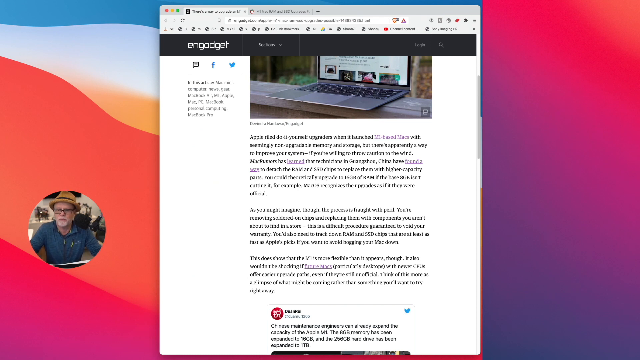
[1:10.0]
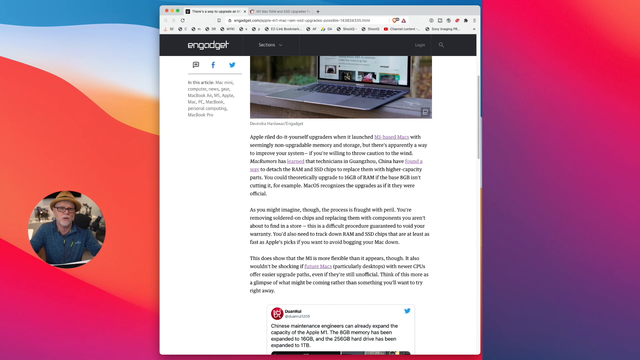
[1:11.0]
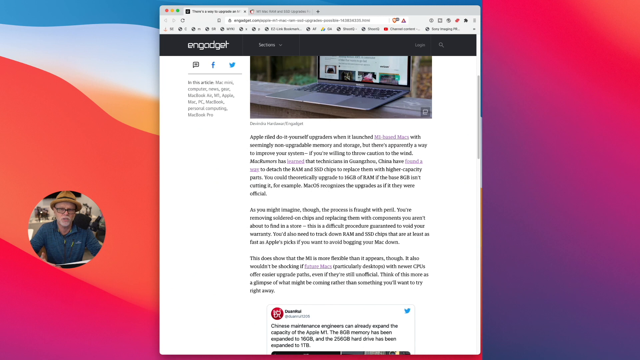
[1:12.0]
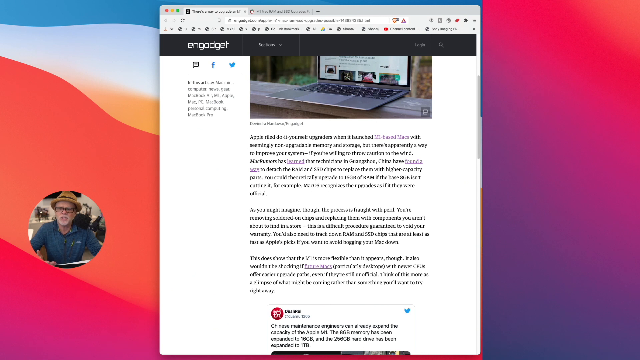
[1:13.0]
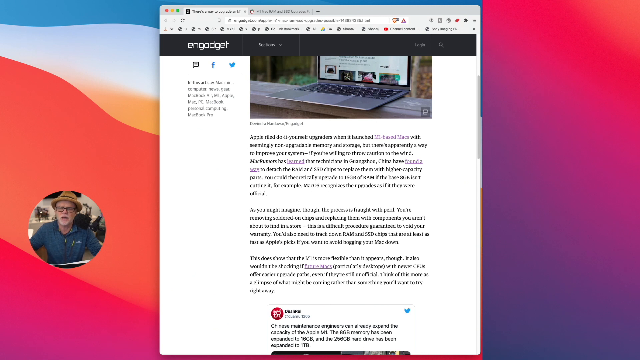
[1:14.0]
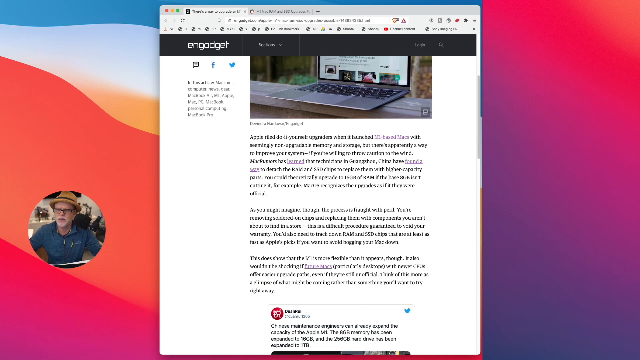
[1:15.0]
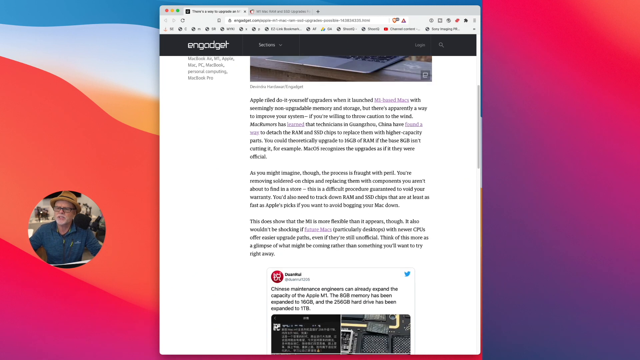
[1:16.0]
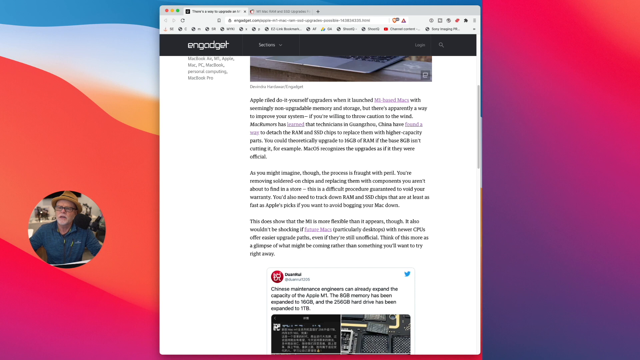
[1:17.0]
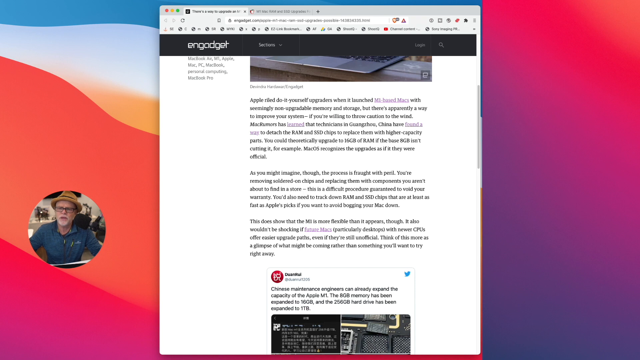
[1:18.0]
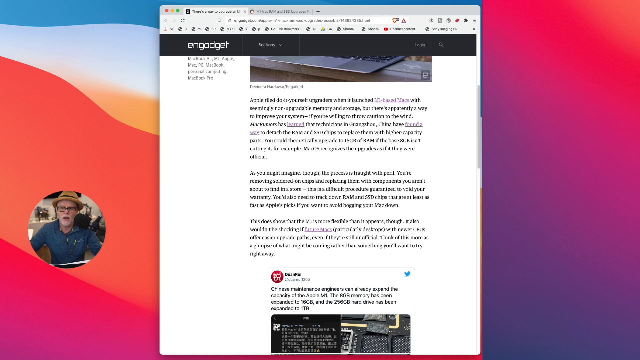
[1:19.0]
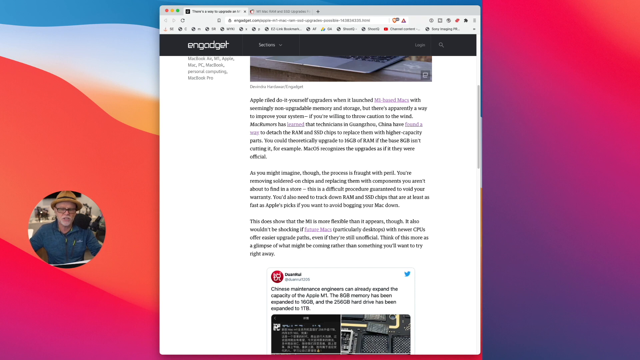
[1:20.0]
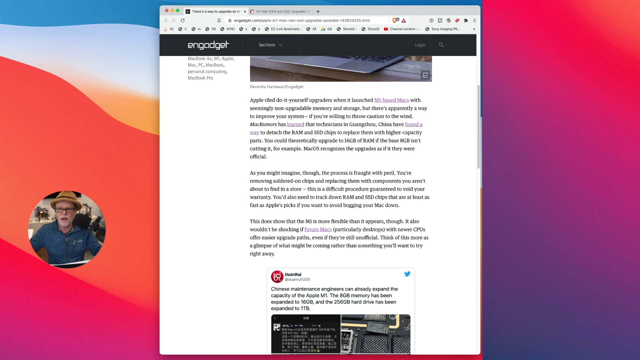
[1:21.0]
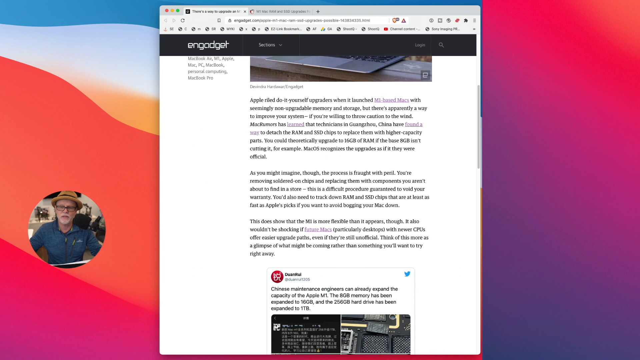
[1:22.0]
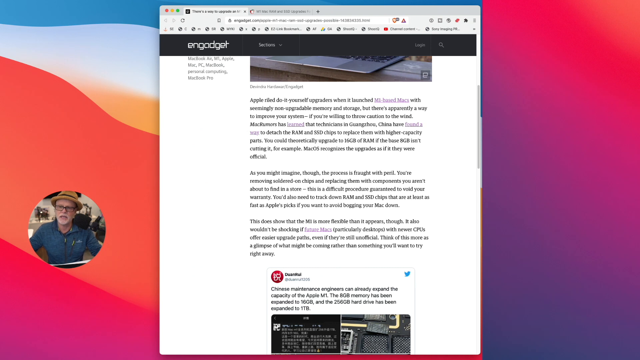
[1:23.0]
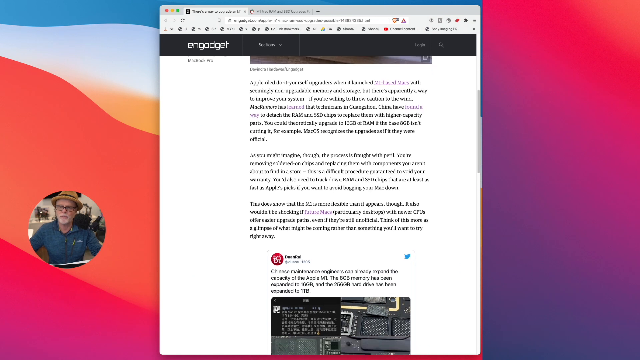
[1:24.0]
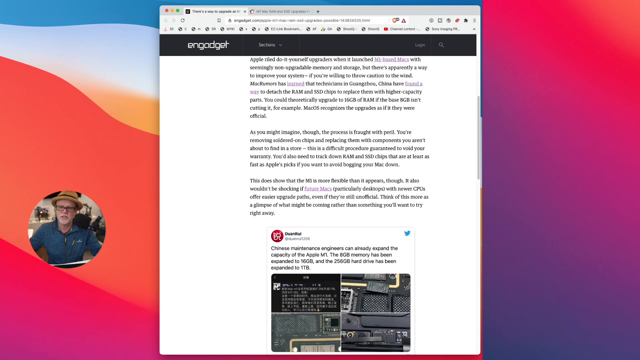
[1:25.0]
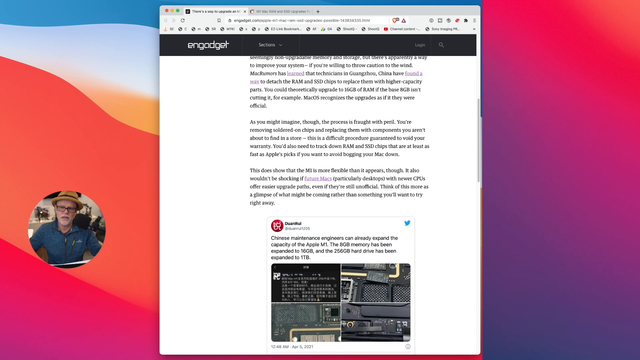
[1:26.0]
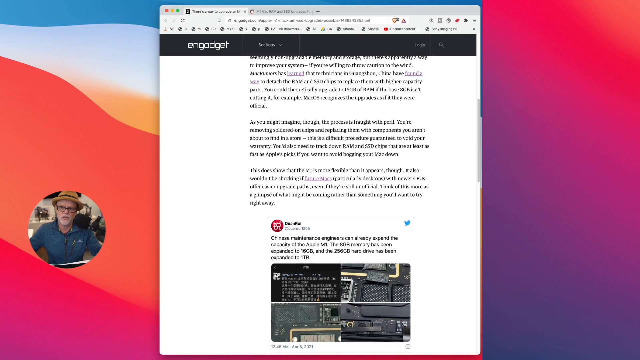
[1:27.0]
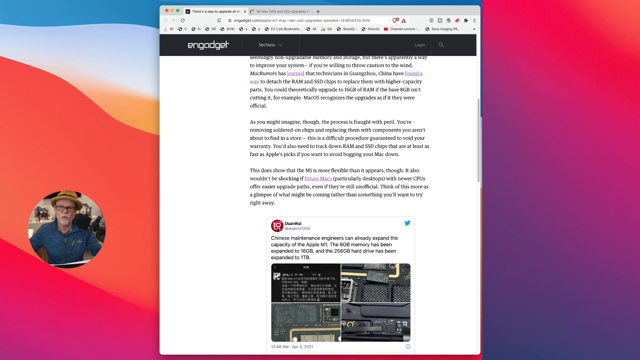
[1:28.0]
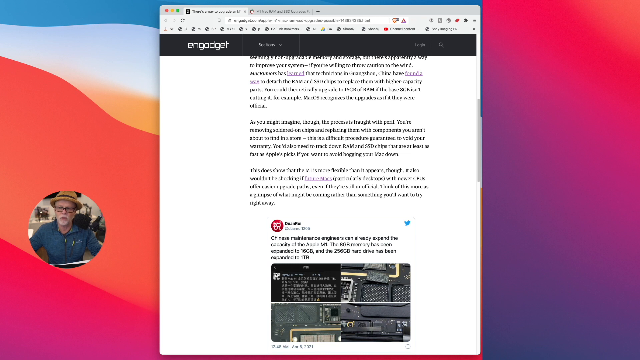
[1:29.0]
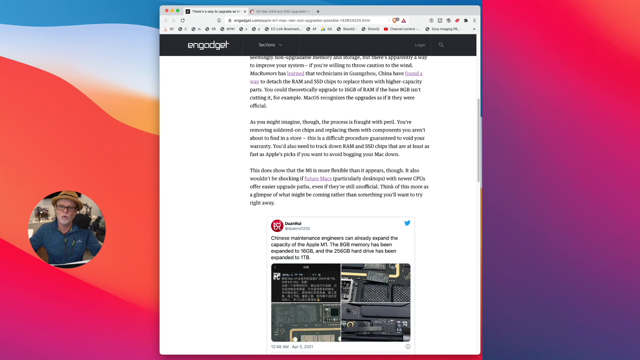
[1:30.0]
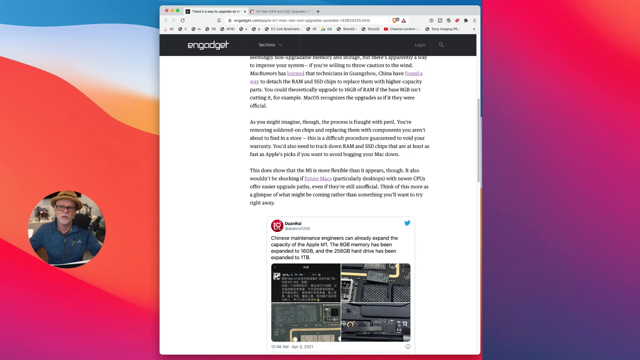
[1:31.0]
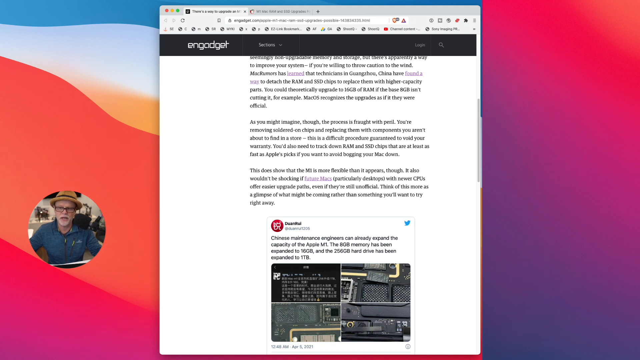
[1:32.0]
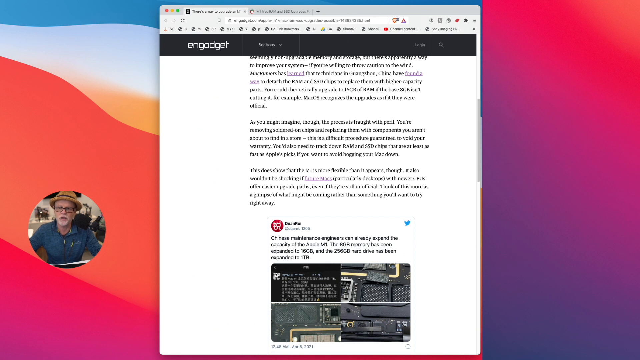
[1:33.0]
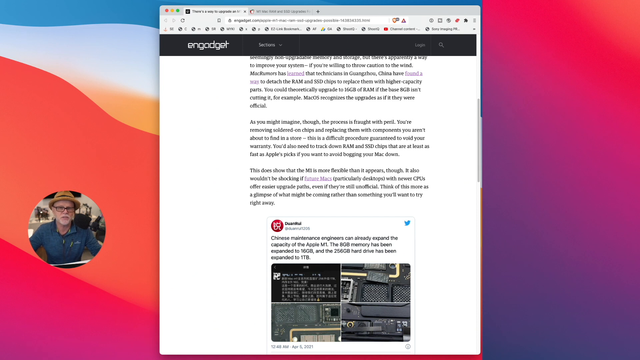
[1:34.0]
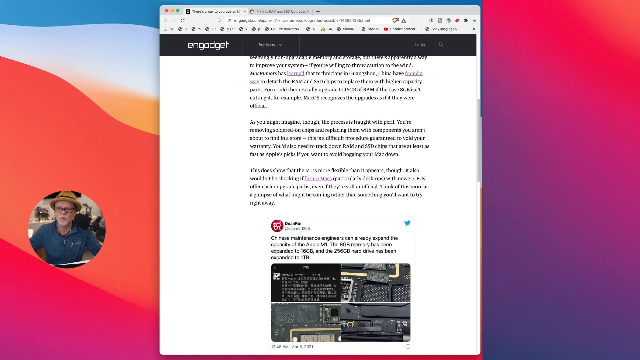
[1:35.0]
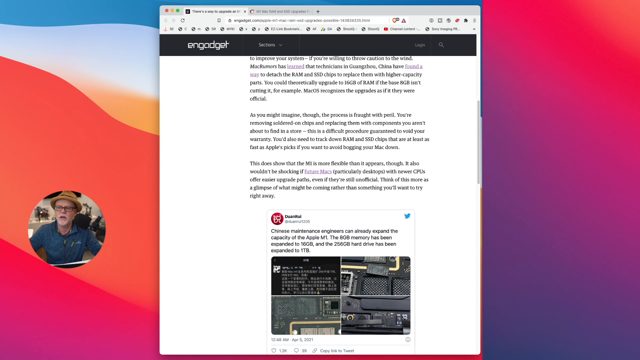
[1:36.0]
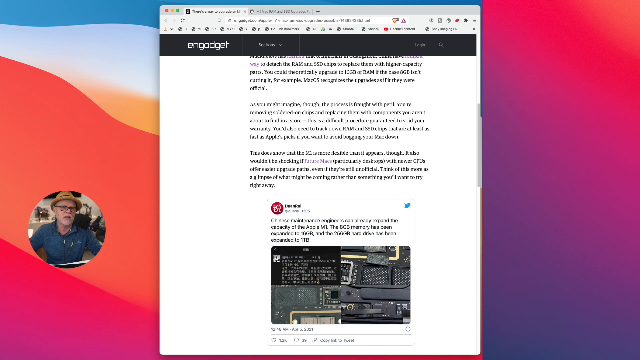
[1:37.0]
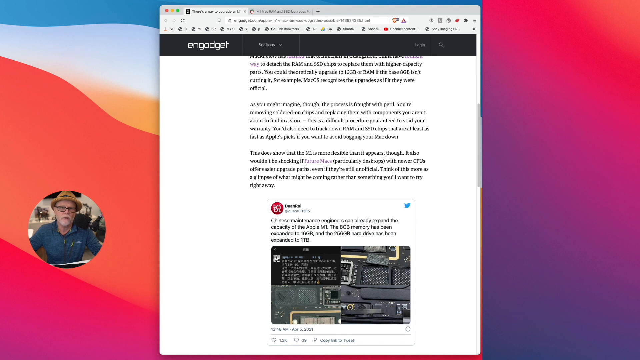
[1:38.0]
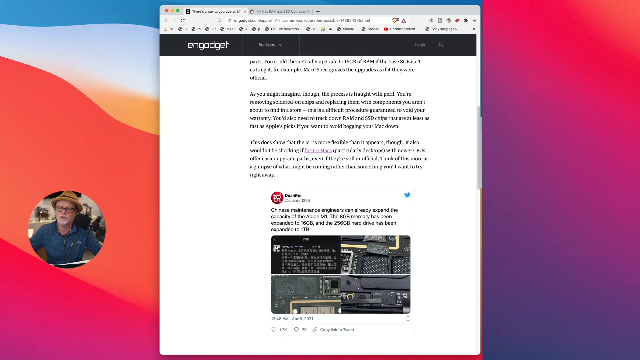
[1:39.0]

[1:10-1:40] The man, with his microphone, appears in a circle, and the website he pulled up is on the right side of him. He keeps talking with the website up, lifts his right hand a little and puts it back down, then scrolls slightly down the page to a tweet whose text is too small to read; the tweet is mainly what is on the screen.